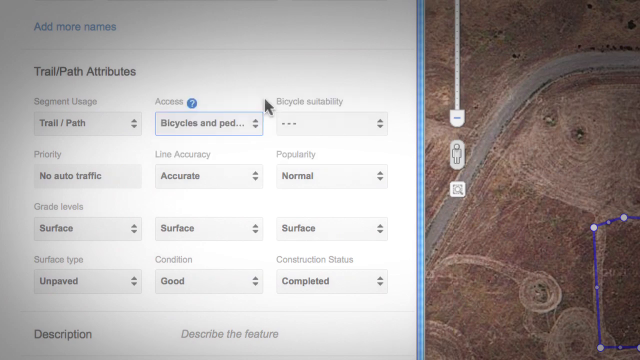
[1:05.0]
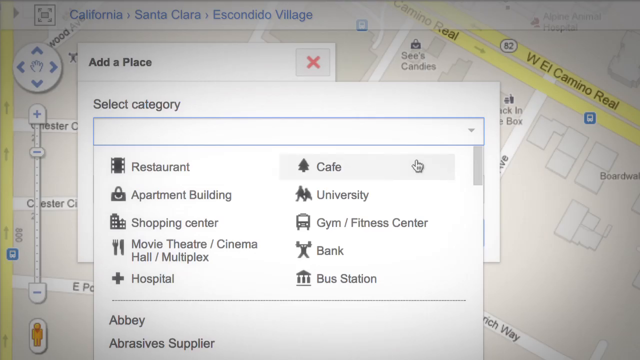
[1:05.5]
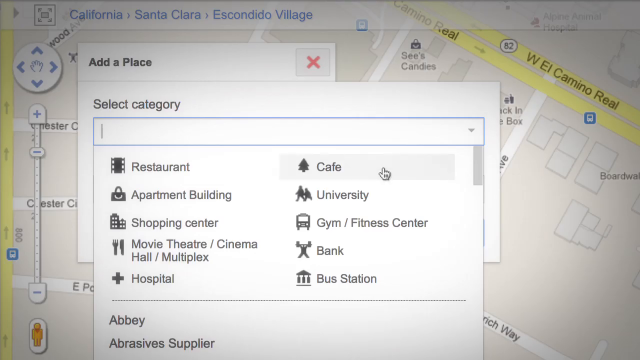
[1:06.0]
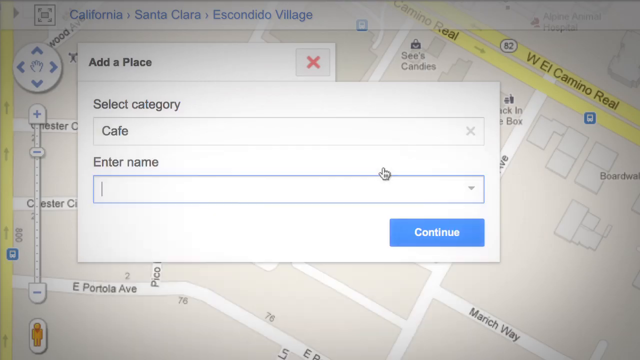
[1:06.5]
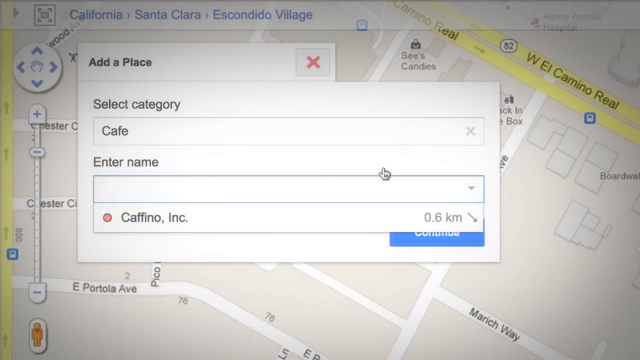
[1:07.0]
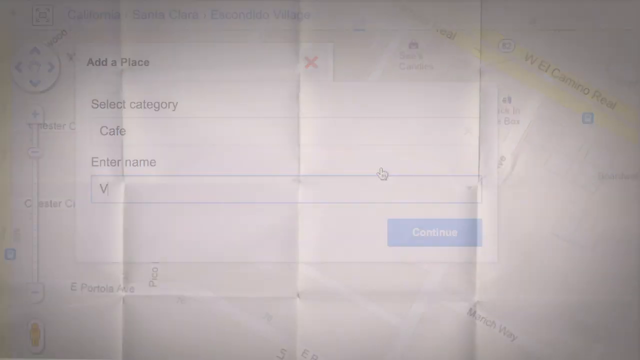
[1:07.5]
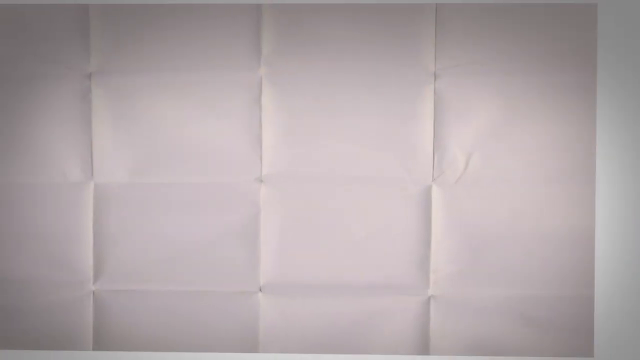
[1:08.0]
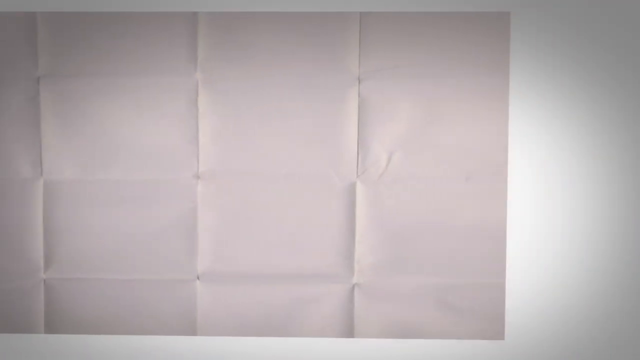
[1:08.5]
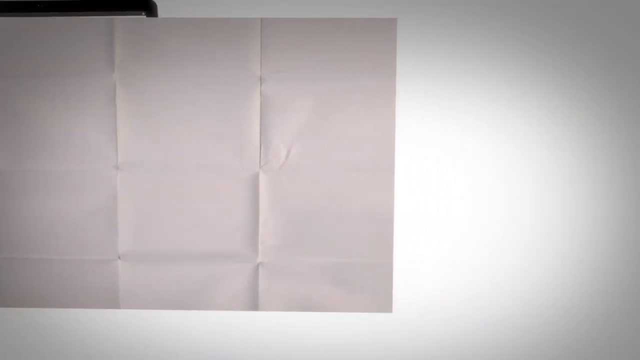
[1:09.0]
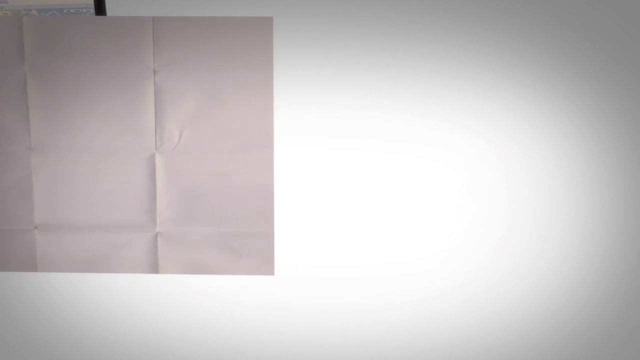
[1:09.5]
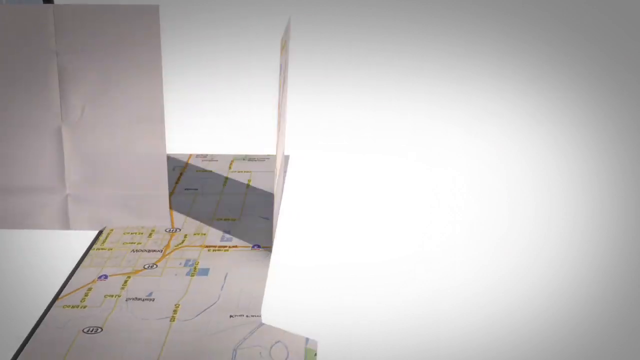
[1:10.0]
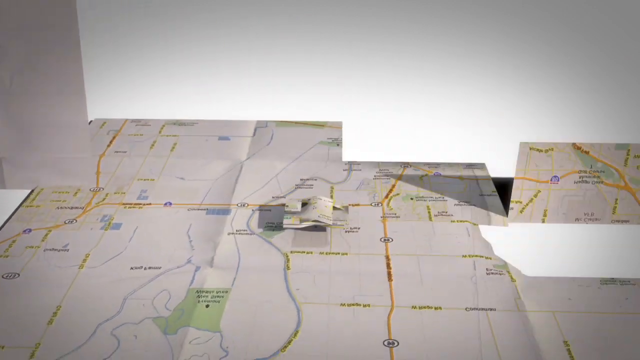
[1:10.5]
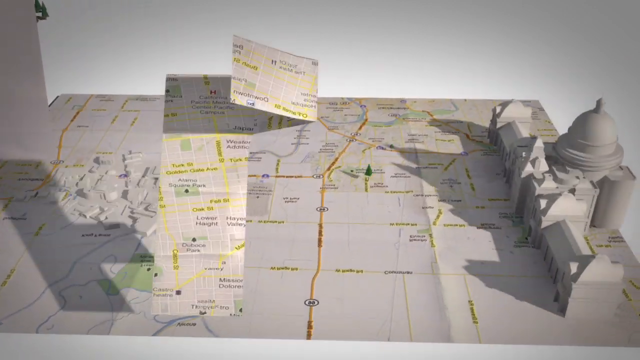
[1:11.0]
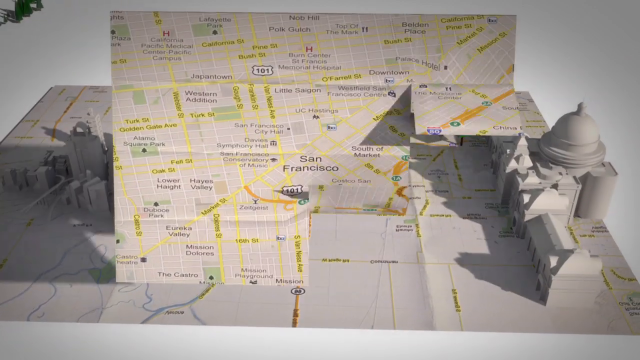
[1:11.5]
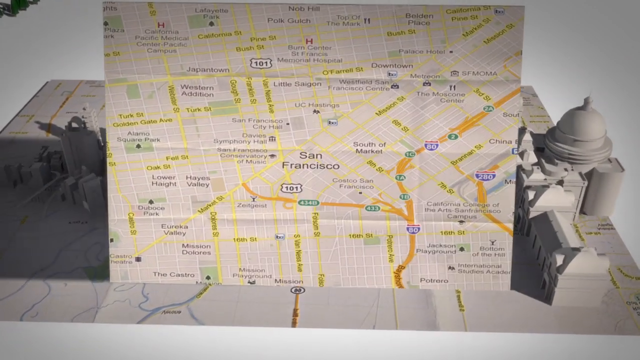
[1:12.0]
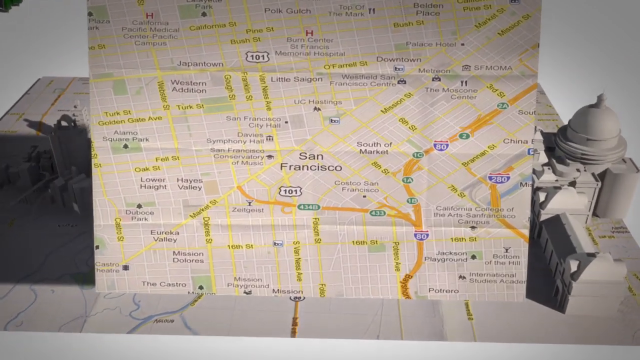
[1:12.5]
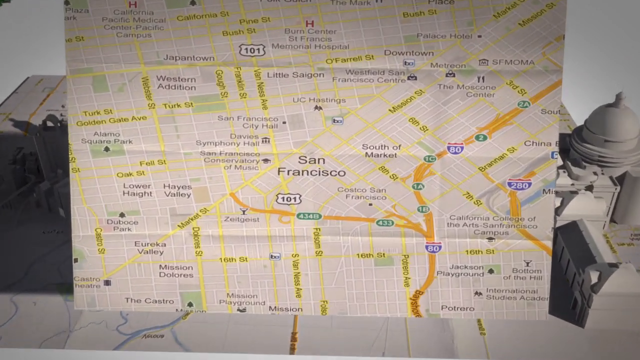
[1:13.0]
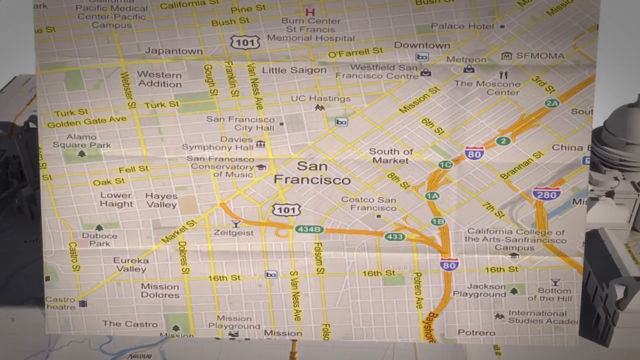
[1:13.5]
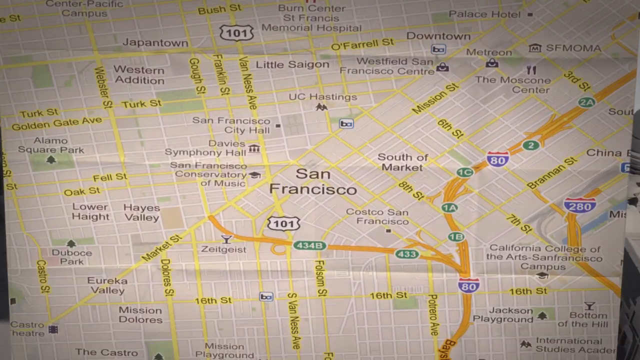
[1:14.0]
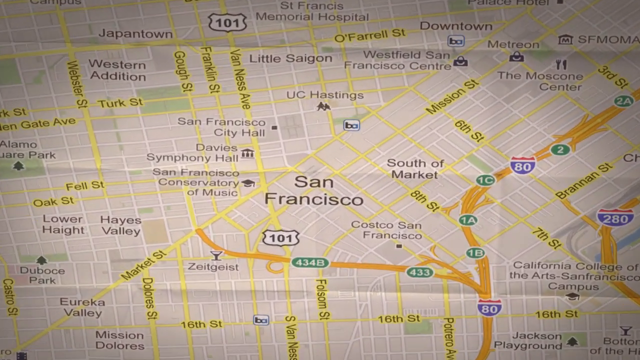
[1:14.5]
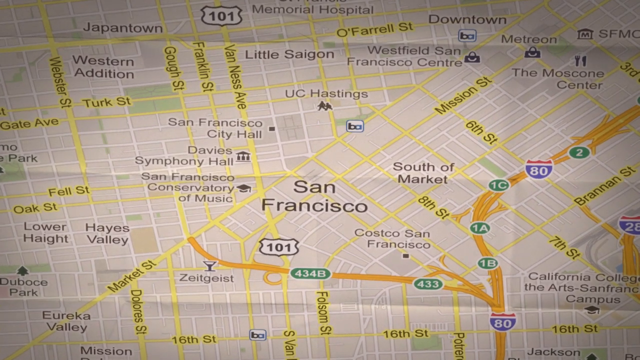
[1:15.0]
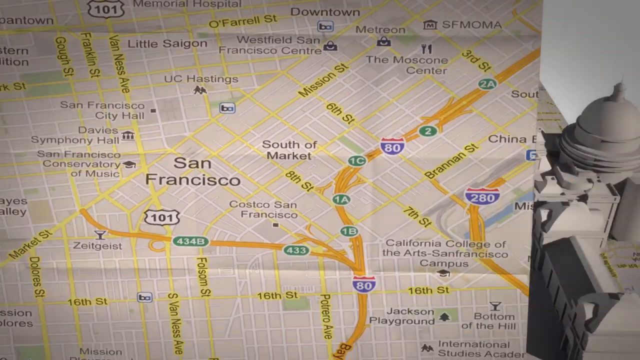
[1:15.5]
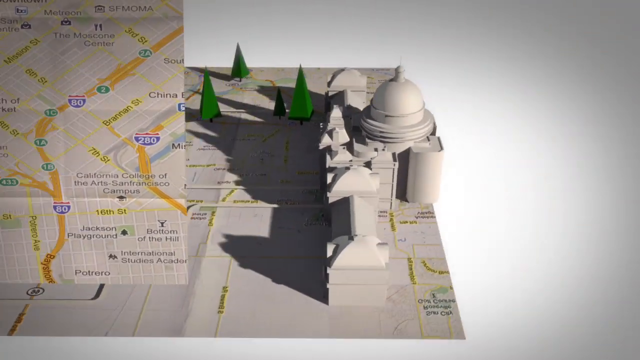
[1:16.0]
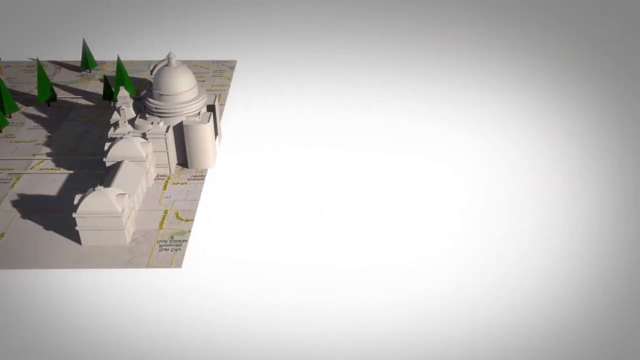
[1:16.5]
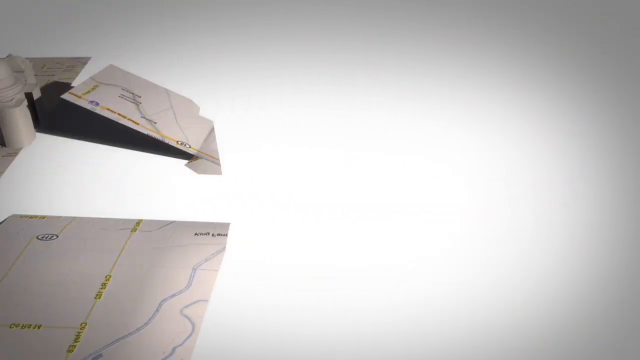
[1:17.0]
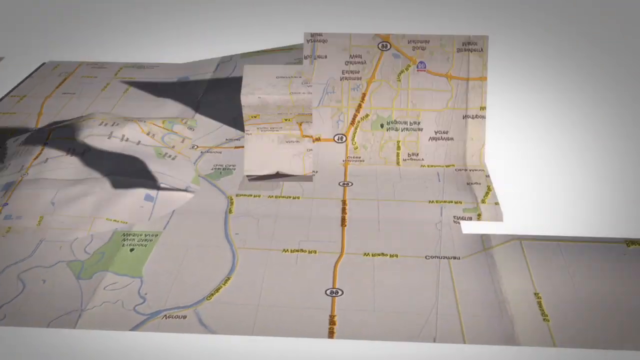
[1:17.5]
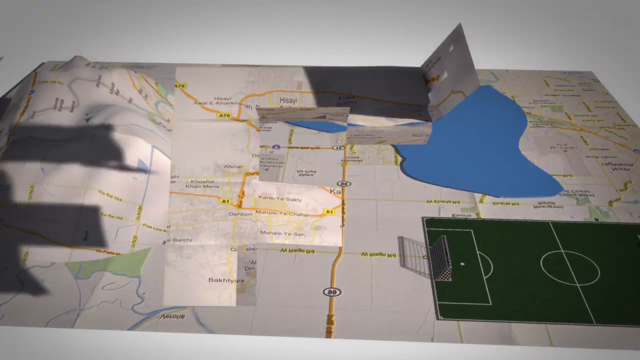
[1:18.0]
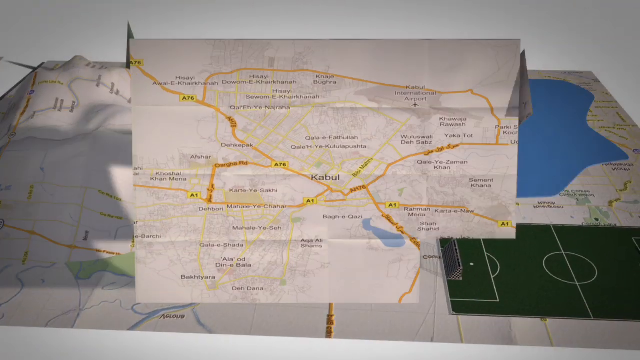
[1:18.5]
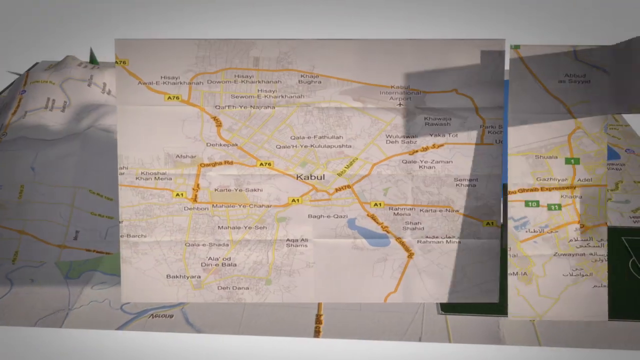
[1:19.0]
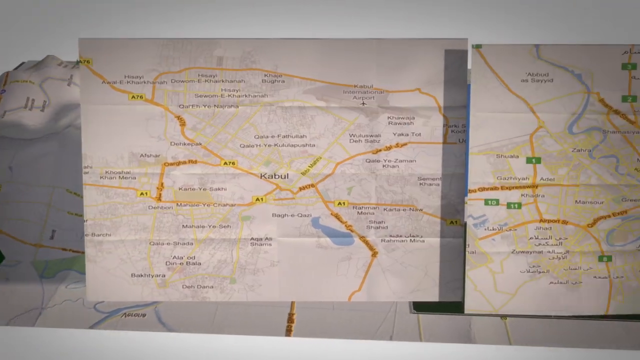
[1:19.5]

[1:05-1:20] Different categories to search for on the map are shown, such as a cafe, a university and other types of places. The whole map is still in 3D and unfolds to show different buildings and locations as well as the roadways. The buildings are white, and trees, mountains and hills pop up, along with lakes and bodies of water depending on the place. The first map focused on is San Francisco, with various places in San Francisco.